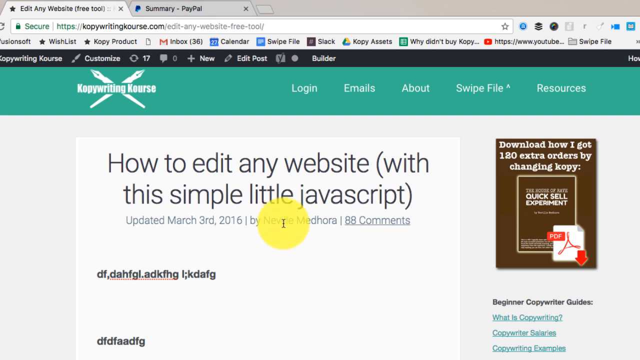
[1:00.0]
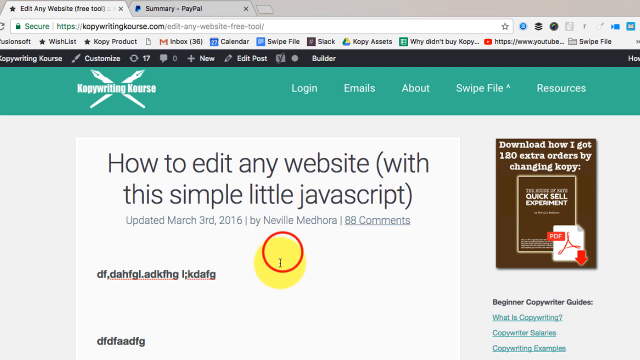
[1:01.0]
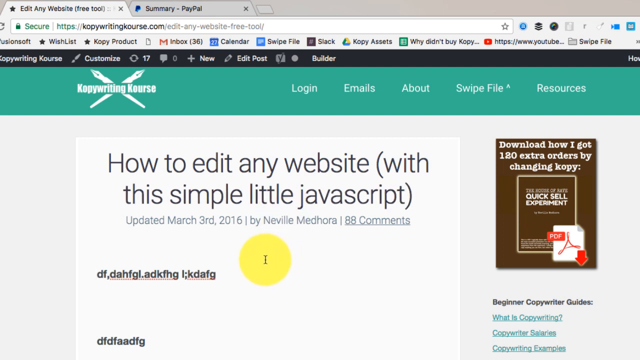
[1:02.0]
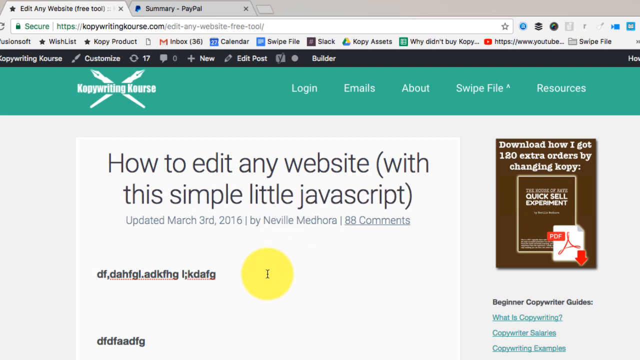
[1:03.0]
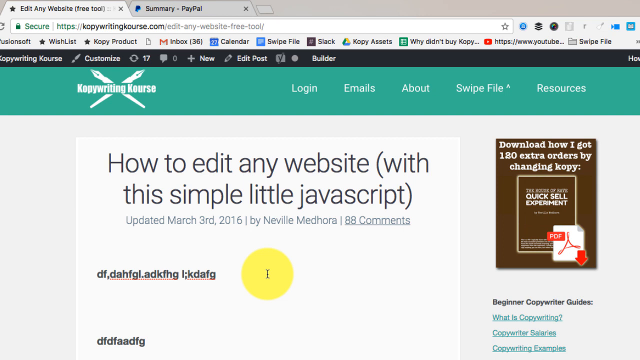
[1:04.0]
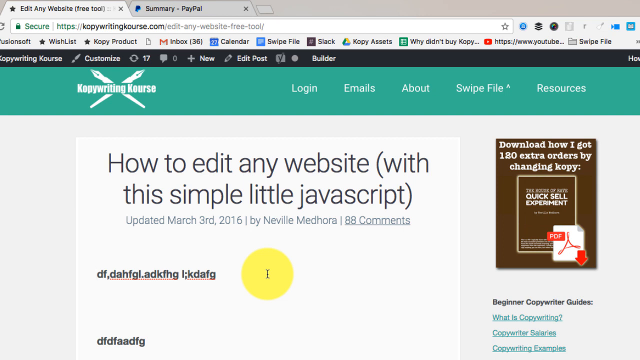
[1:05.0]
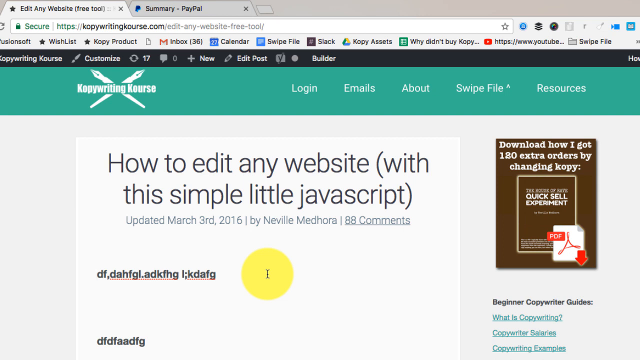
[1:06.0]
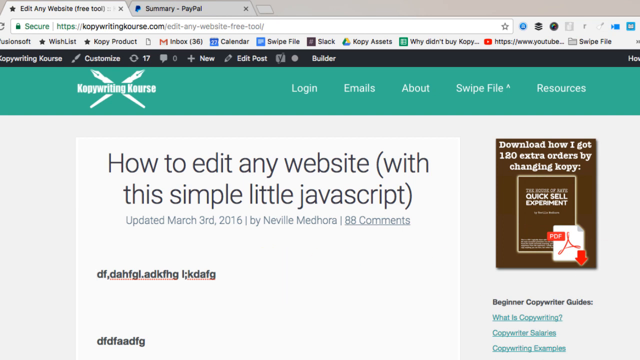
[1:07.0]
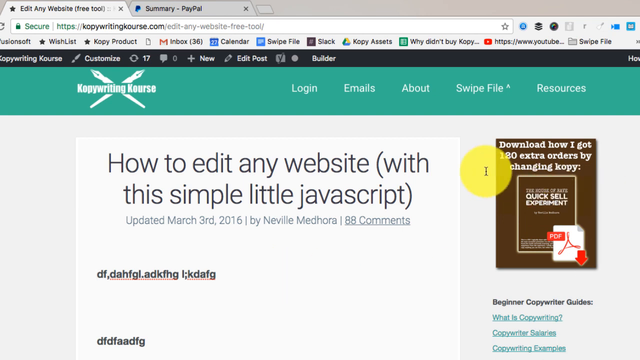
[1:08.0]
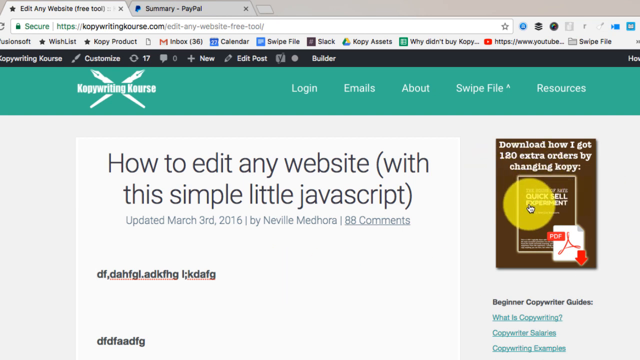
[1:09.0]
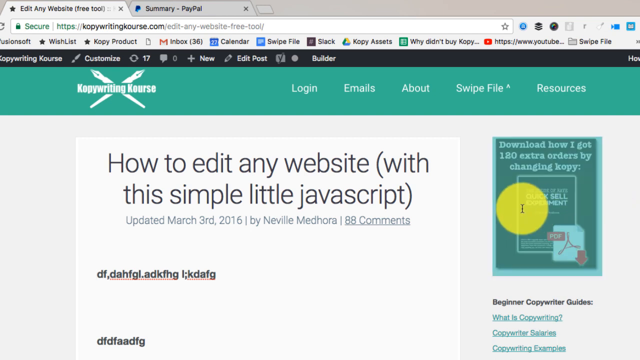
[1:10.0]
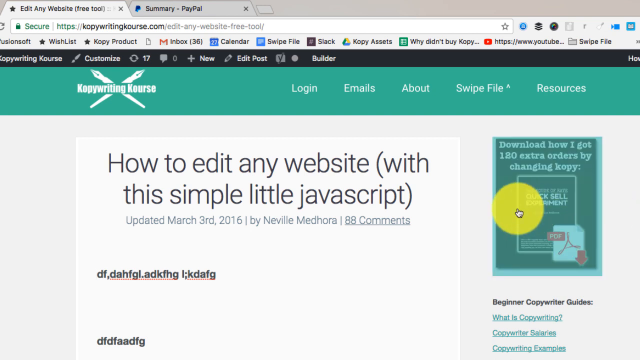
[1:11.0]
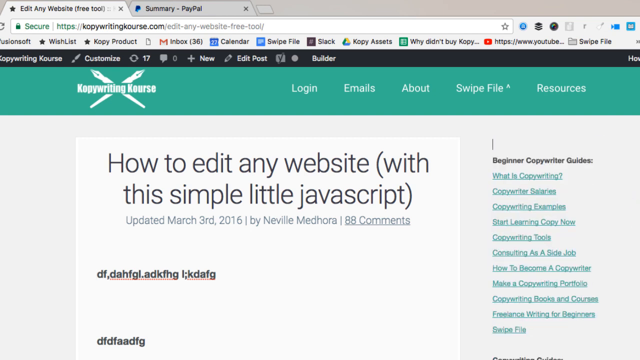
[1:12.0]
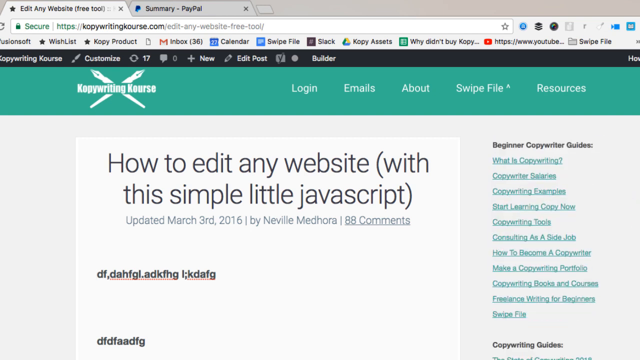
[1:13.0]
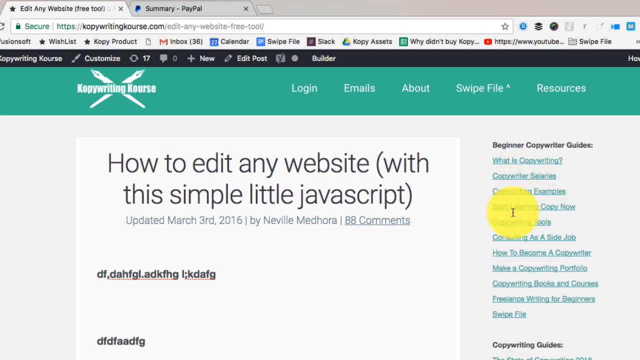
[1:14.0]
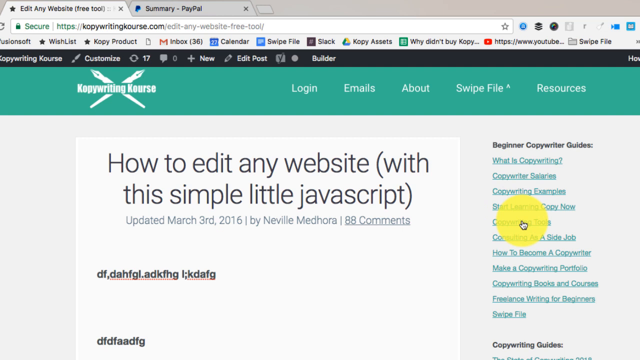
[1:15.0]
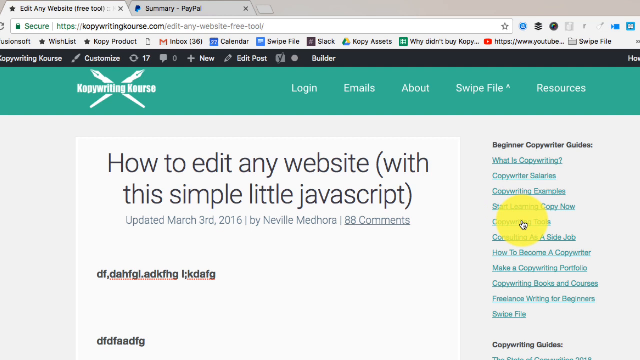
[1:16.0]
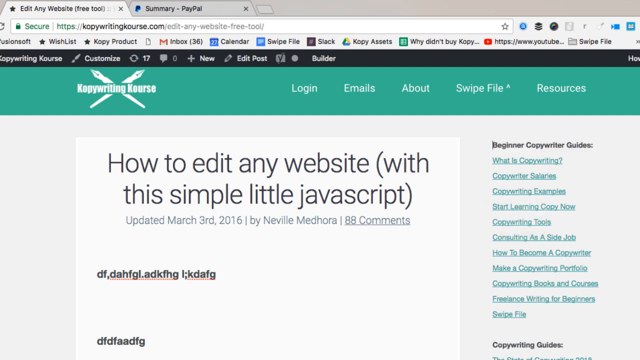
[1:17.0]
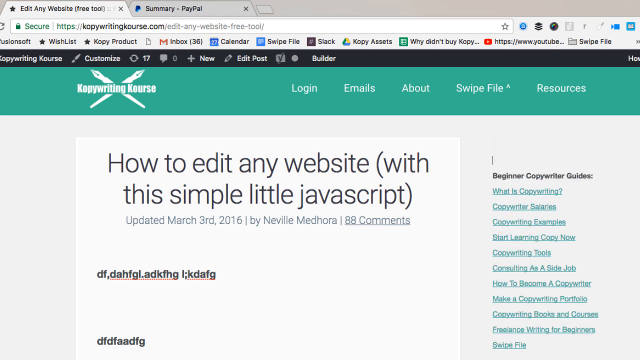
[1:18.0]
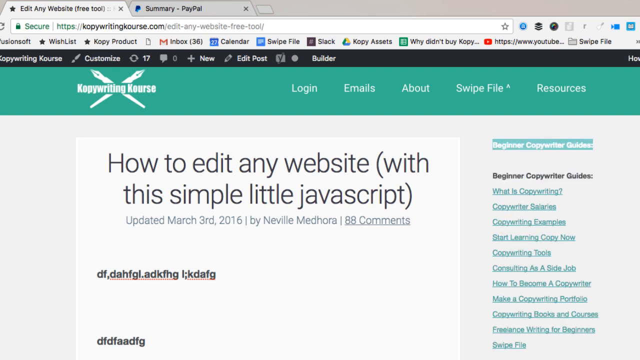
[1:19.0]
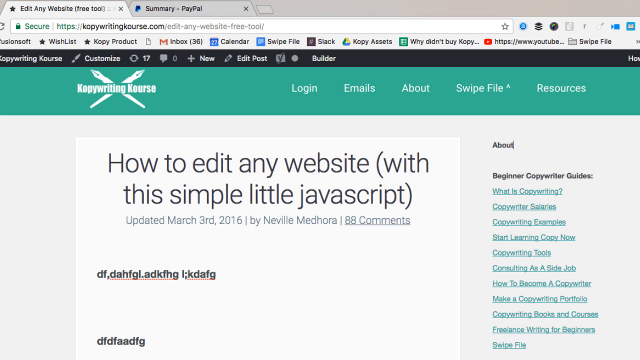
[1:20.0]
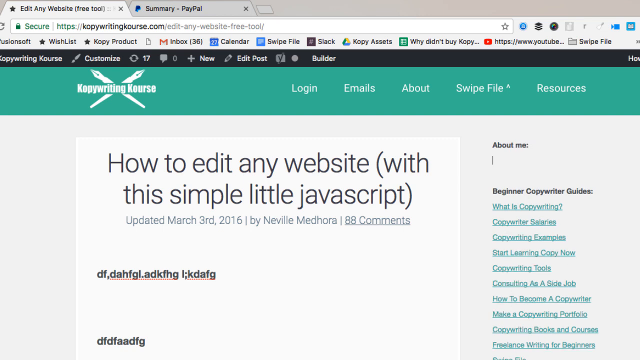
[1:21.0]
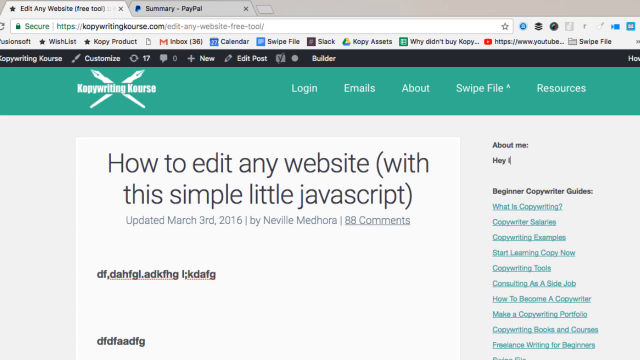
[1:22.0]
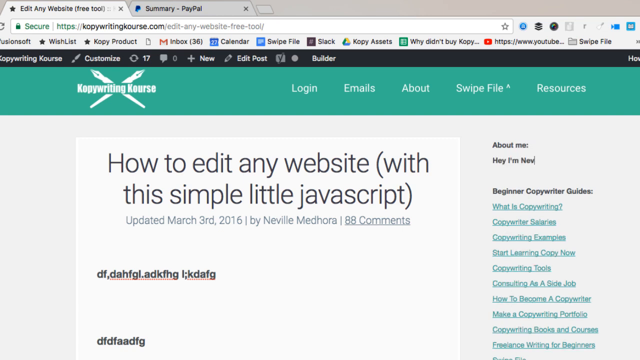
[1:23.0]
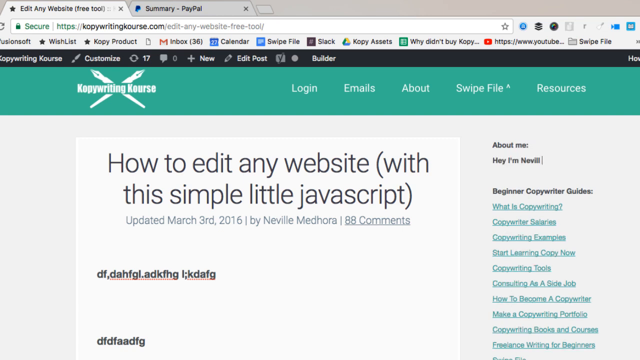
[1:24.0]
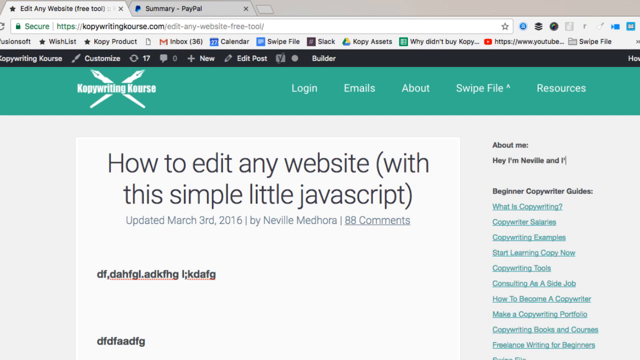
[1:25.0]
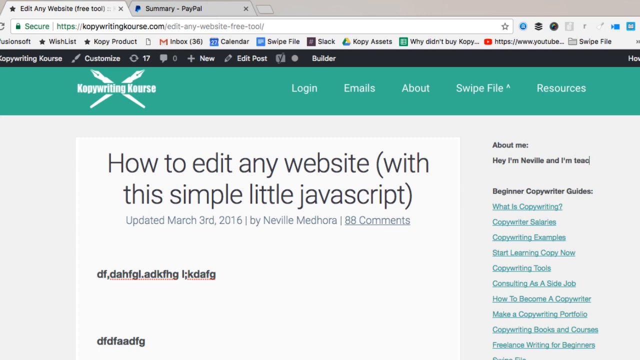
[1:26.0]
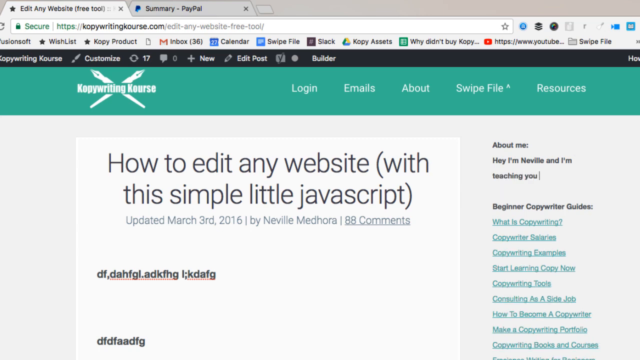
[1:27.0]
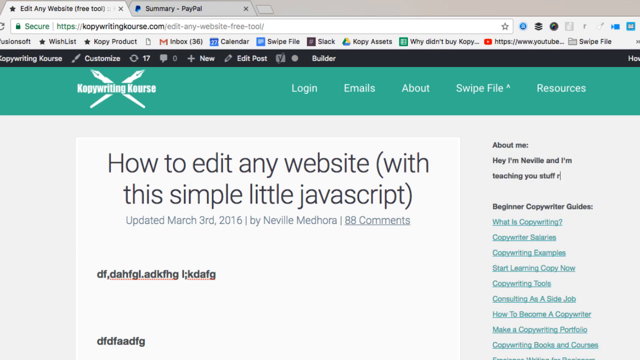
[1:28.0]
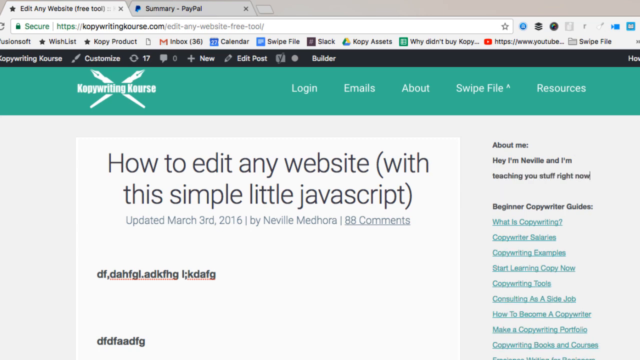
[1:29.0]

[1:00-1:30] Someone is using the Kopywriting Kourse website to edit websites with a JavaScript. The open page has a green navigation bar at the top with the Kopywriting Kourse logo on its left side. Below this, someone has typed "How to edit any website (with this simple little Javascript)" in a white text box. A yellow circle with a cursor bar in it moves about the screen. It hovers on a link to a copywriting guide on the right side, and a menu appears with links to different chapters in the guide, some titled "What is Copywriting," "Copywriting Salaries," and "Copywriting Examples," among others. The cursor hovers over these. It clicks on the header "Beginner Copywriter Guides," moves it down, copies it, and then moves it to the top of the page, where it begins typing a new line that reads "Hey, I'm Neville, and I'm teaching you stuff right now."